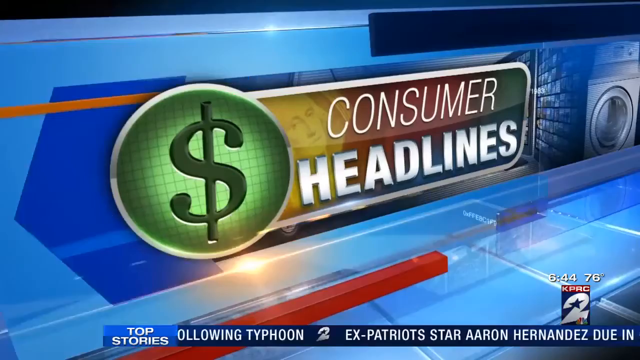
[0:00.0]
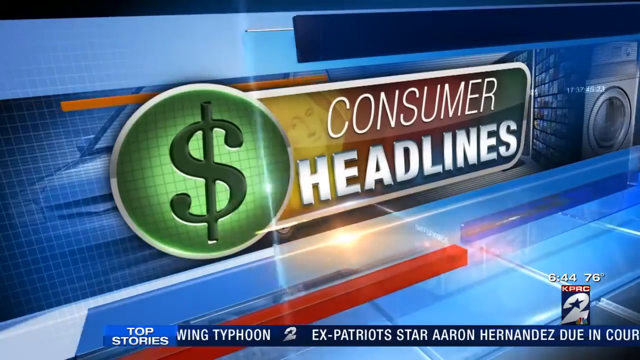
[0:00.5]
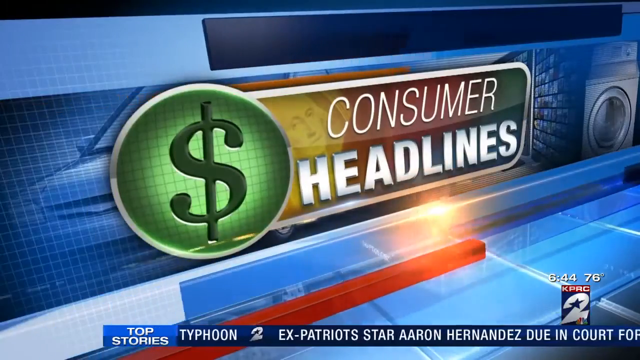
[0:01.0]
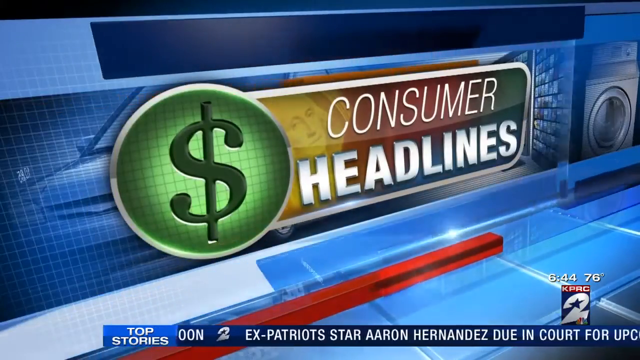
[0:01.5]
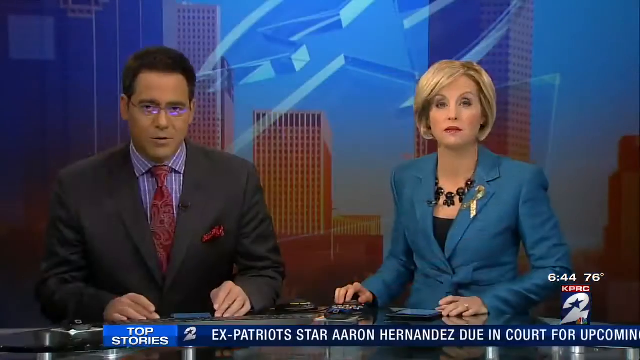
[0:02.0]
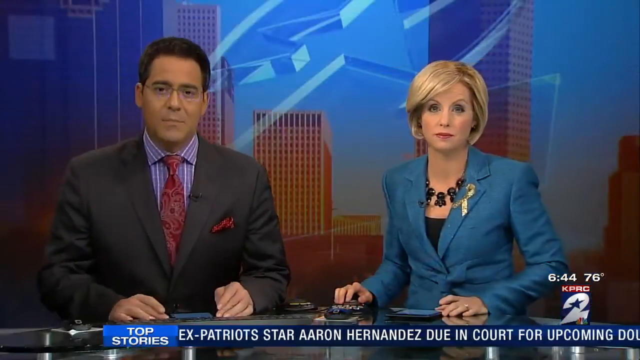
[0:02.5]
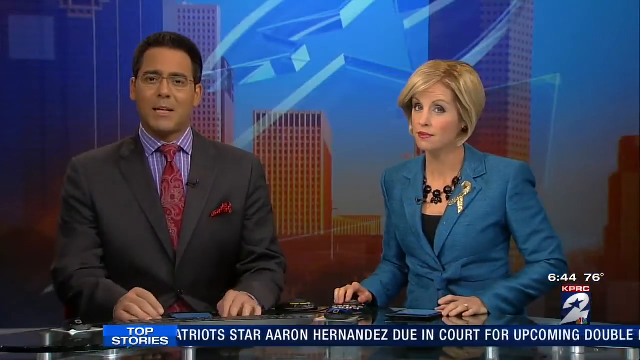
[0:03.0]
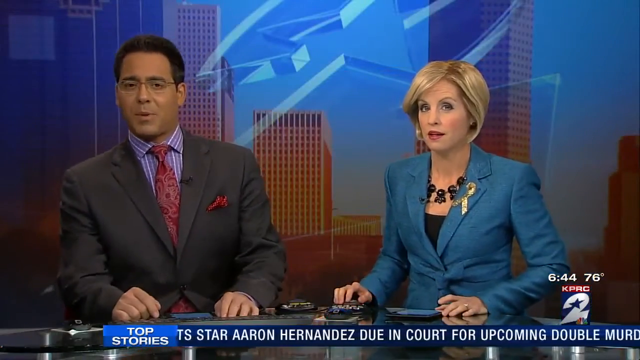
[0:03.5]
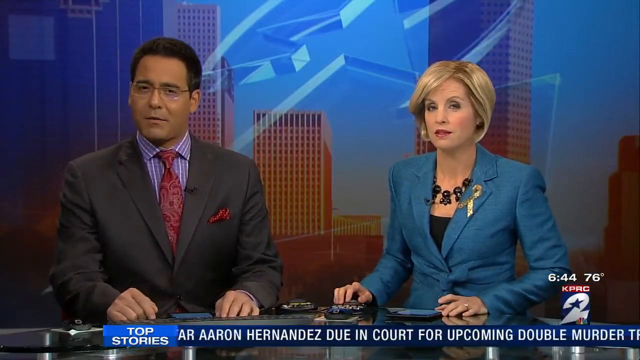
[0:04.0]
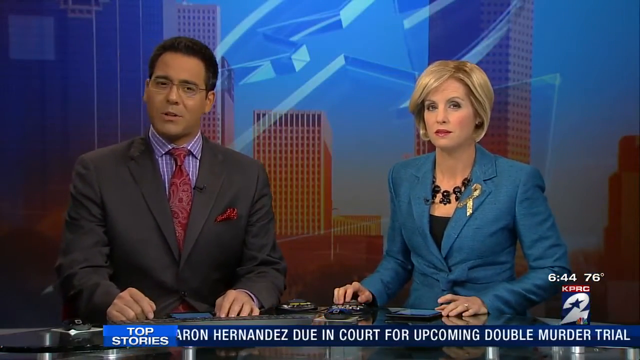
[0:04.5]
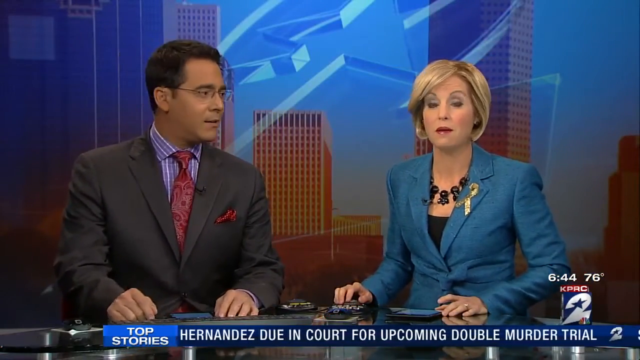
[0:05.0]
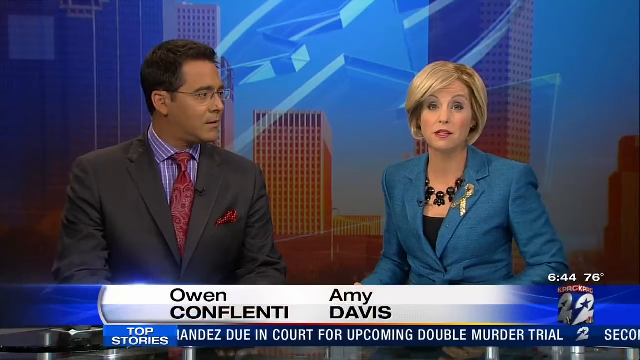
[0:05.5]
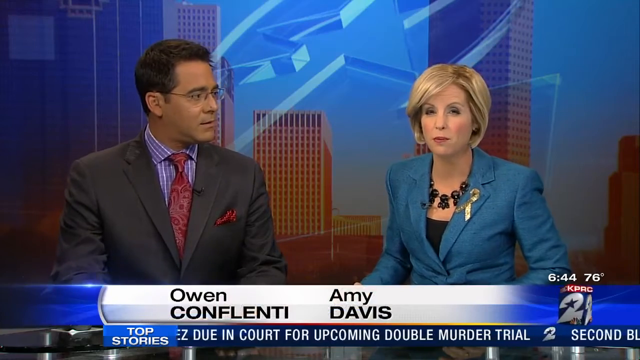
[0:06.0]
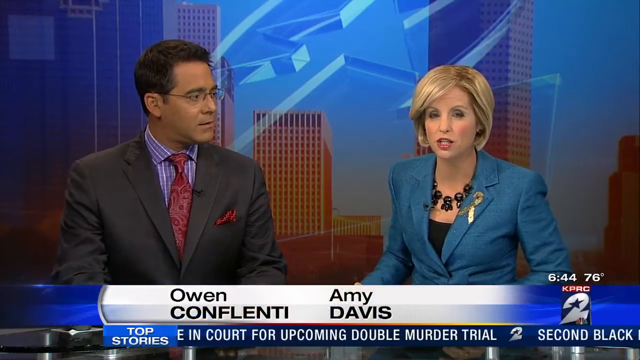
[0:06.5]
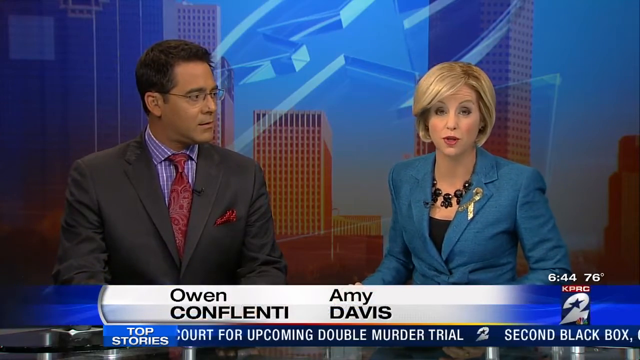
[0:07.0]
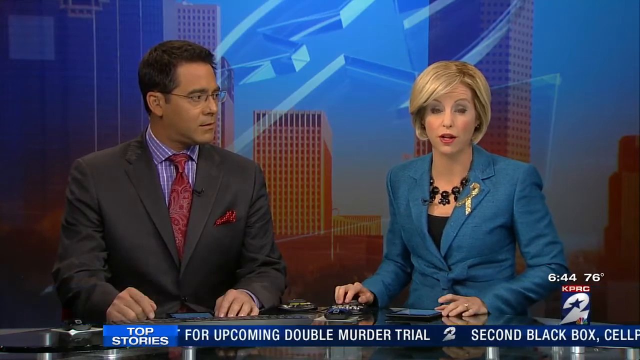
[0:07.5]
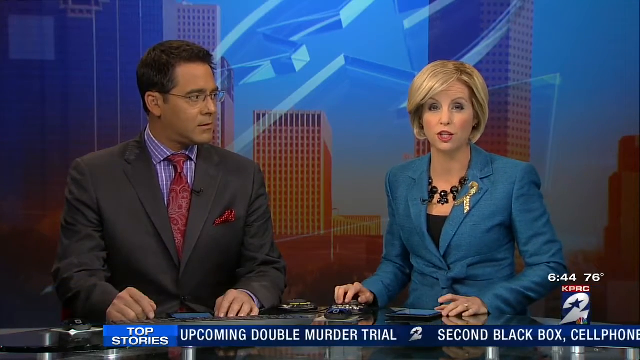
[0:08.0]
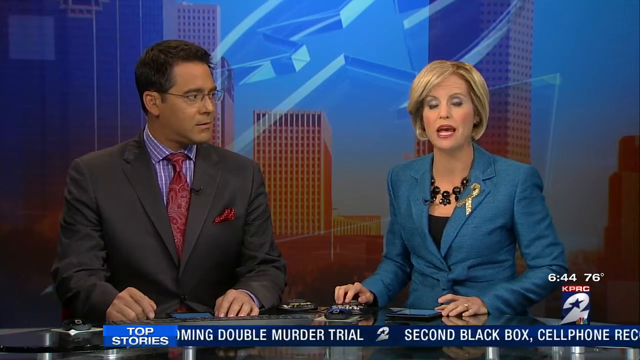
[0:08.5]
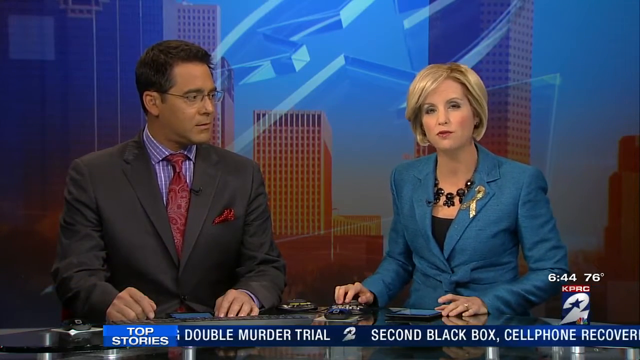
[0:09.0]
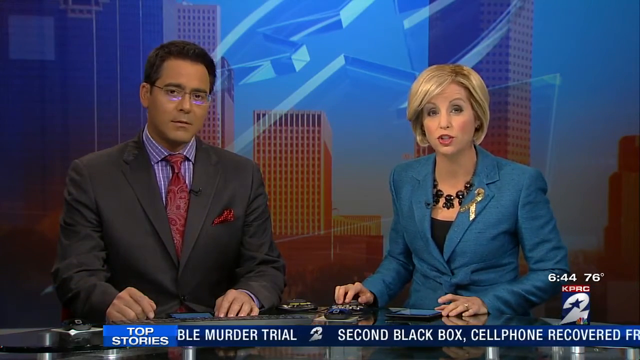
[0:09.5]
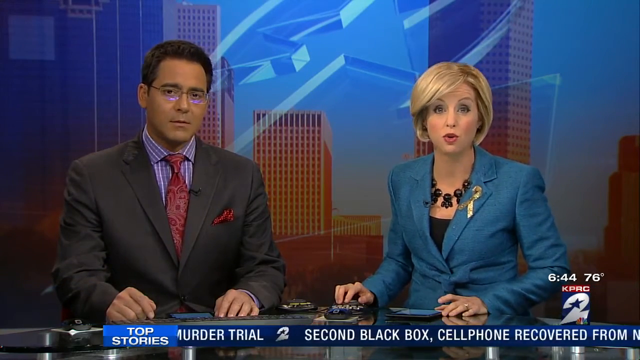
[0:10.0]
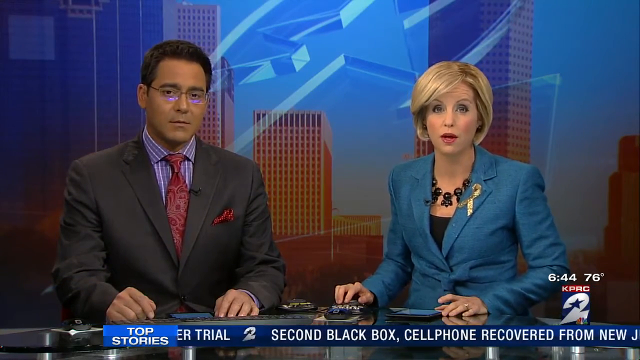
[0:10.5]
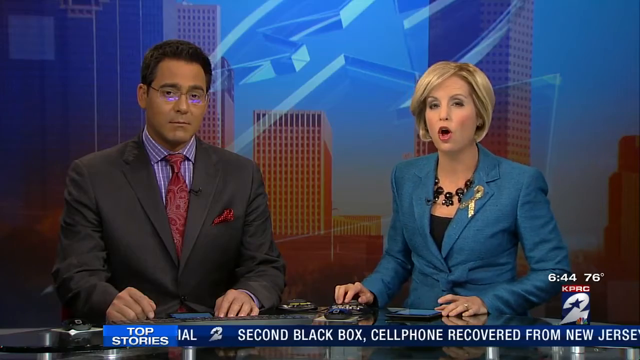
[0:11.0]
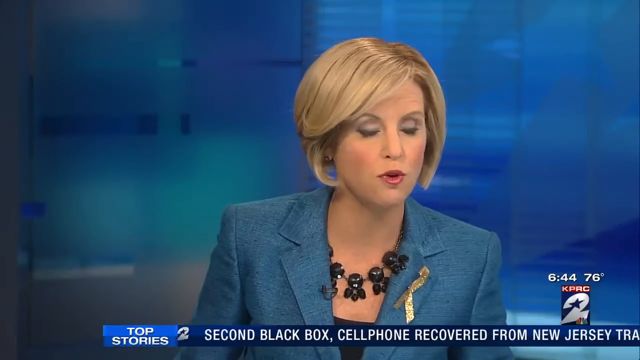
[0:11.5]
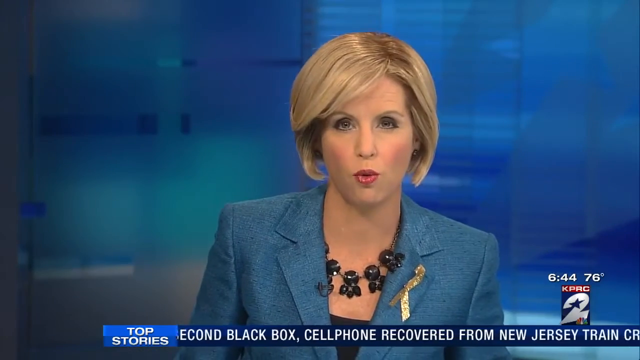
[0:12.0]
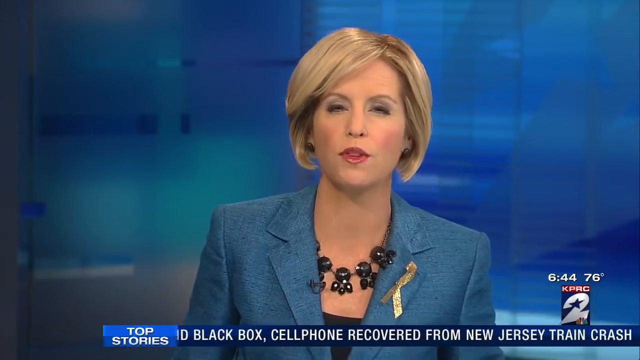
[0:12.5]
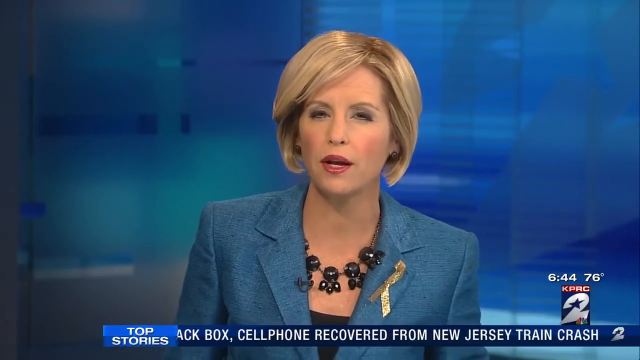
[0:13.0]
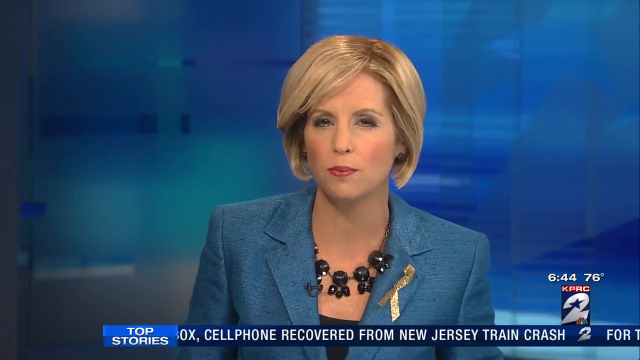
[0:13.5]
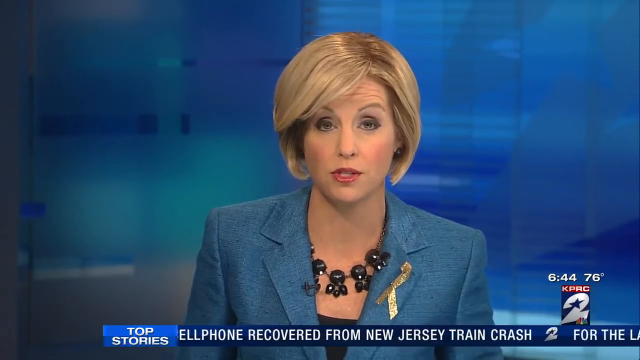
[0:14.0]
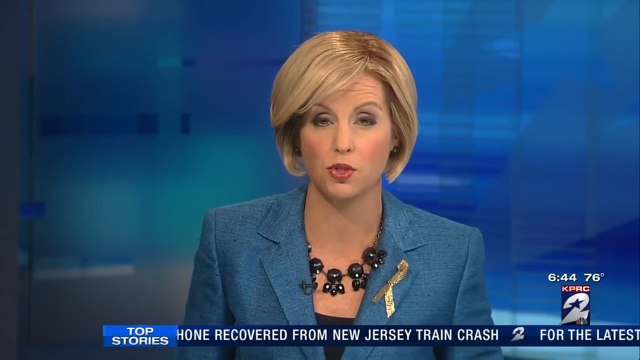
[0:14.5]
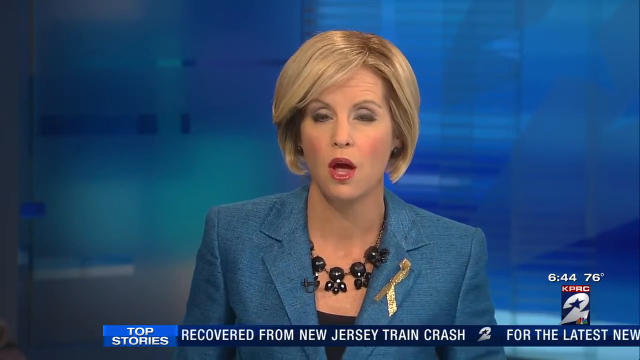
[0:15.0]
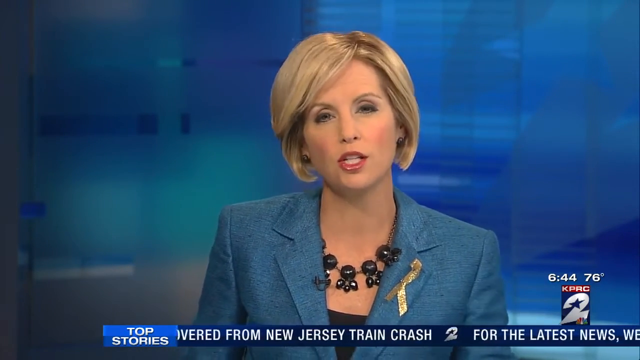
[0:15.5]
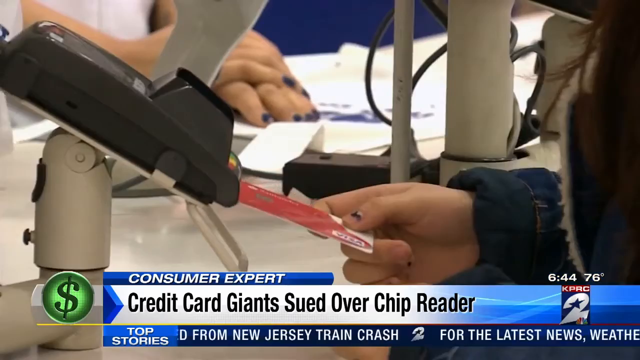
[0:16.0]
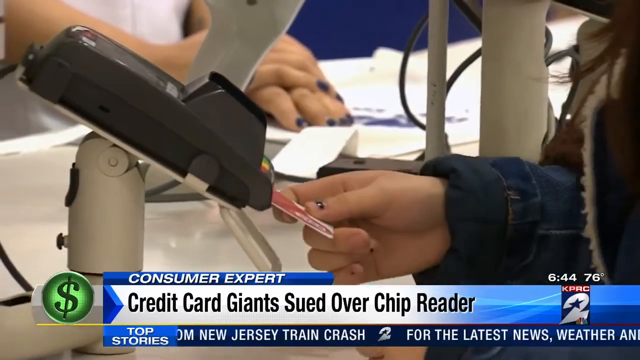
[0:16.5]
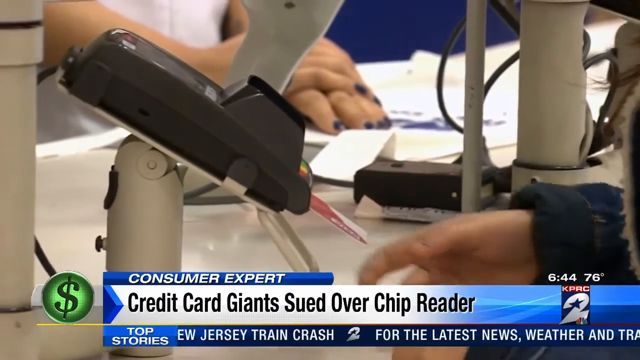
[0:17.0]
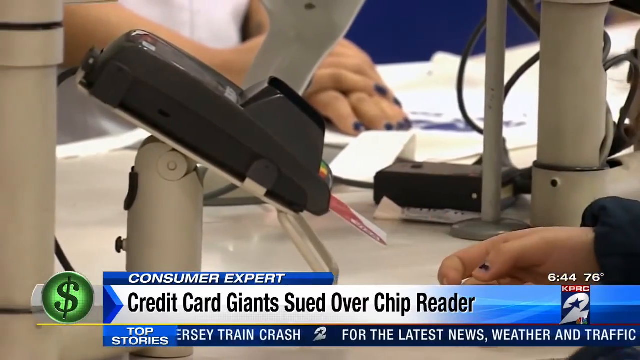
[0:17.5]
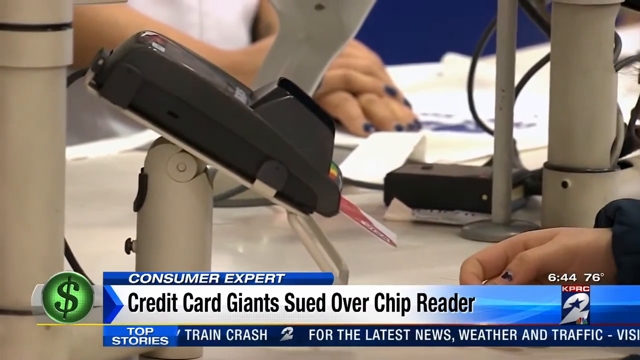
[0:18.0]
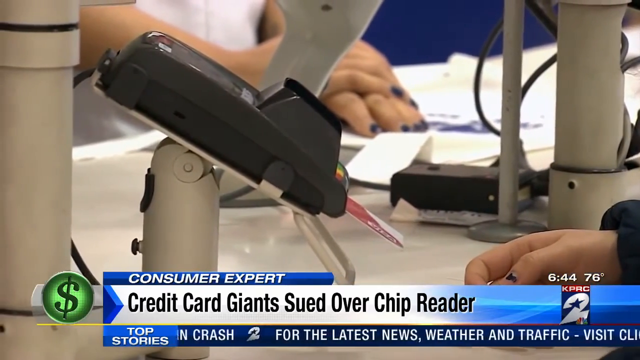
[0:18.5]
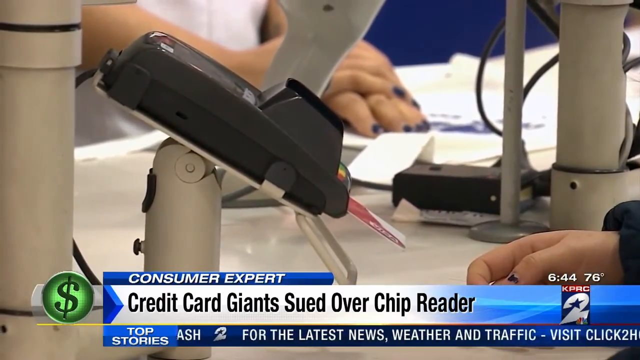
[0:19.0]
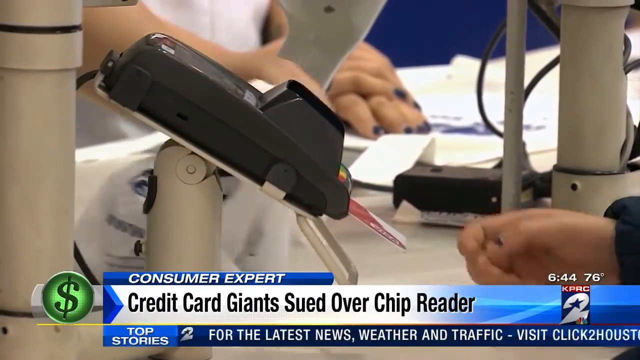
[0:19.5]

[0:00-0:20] A news channel shows the headline "consumer headline." Along the bottom, top stories slide from right to left: one reads "ex-patriot star Aaron Hernandez due in court for upcoming" and another reads "second black box cell phone recovered from New Jersey train crash"; a third is not clearly visible. Two news reporters, Owen Conflenti and Amy Davis, are on screen. Owen wears a black suit, a red tie and a blue t-shirt. Amy, who has blonde hair, wears a blue suit, a black dress and a black necklace. They are talking as they deliver the news, with cell phones, tablets, a keyboard and a mouse in front of them. The time shown is 6:44, and the headline reads "consumer expert credit card giant sued over cheap reader." A person then inserts a card into a speed point, trying to pay for the product she is buying.